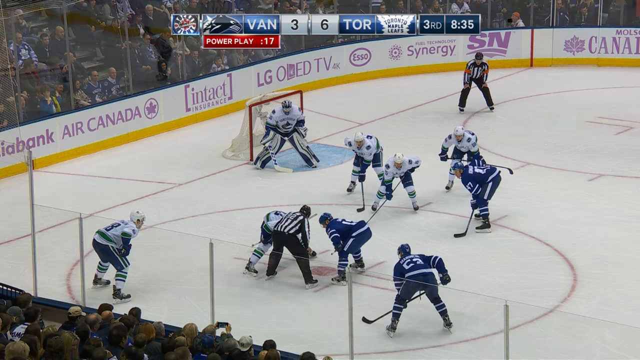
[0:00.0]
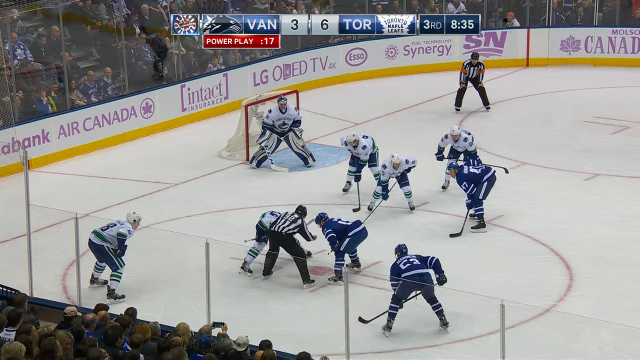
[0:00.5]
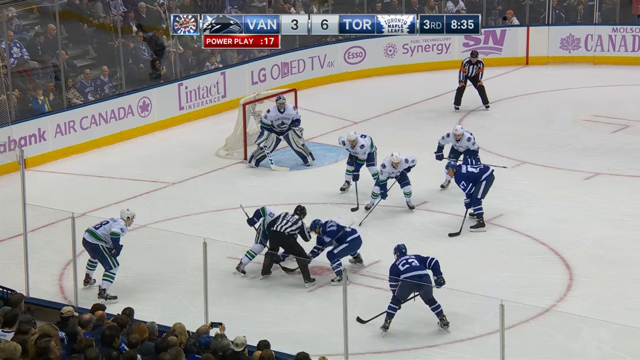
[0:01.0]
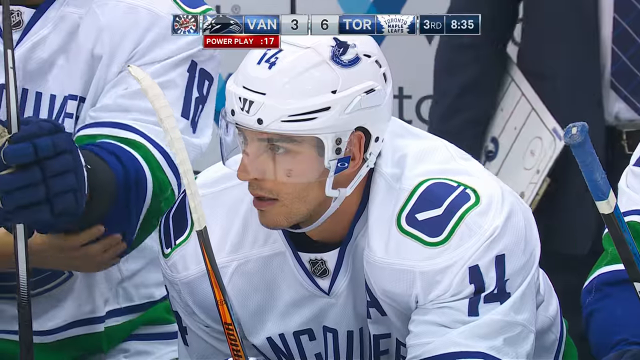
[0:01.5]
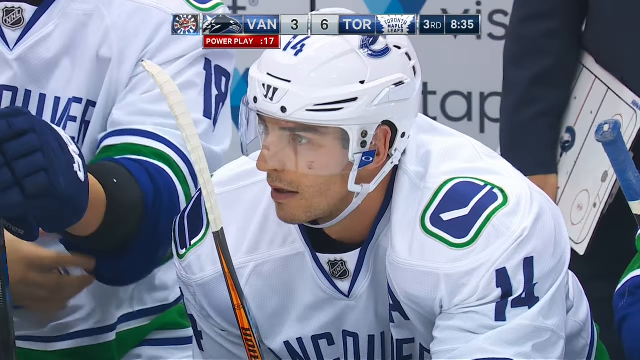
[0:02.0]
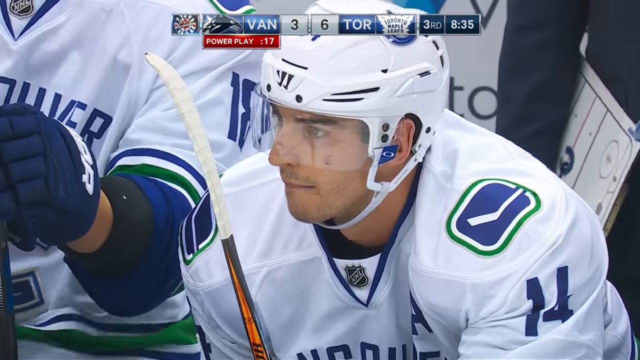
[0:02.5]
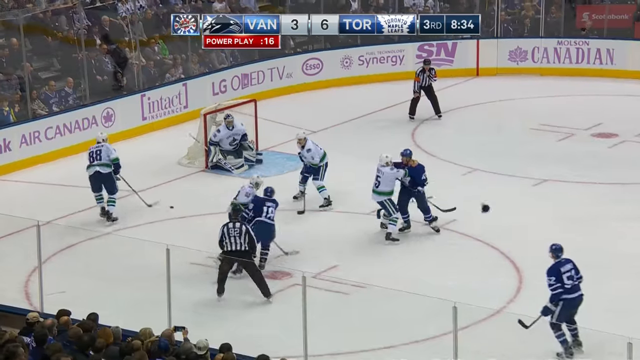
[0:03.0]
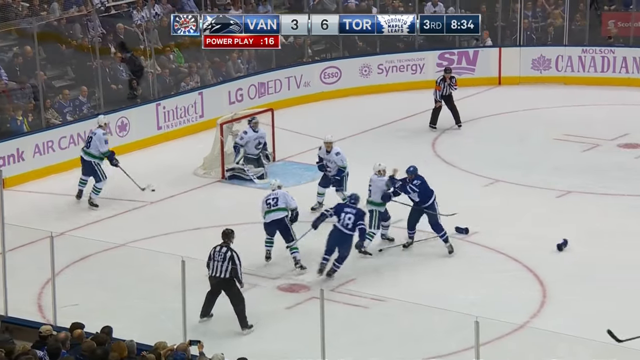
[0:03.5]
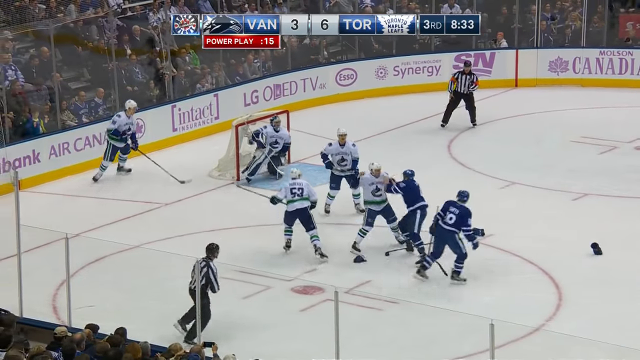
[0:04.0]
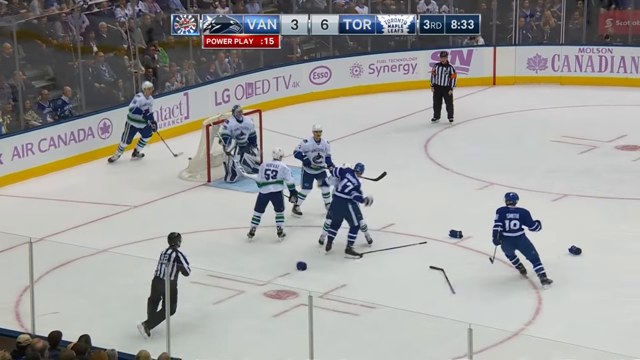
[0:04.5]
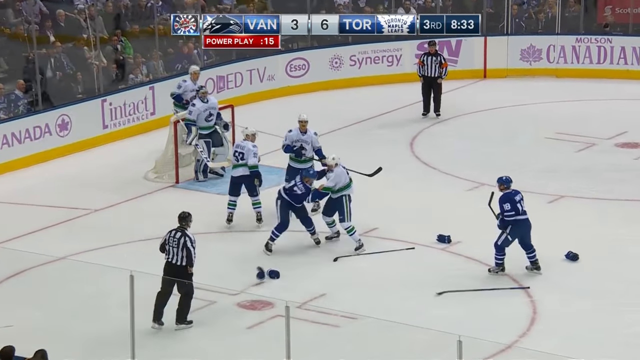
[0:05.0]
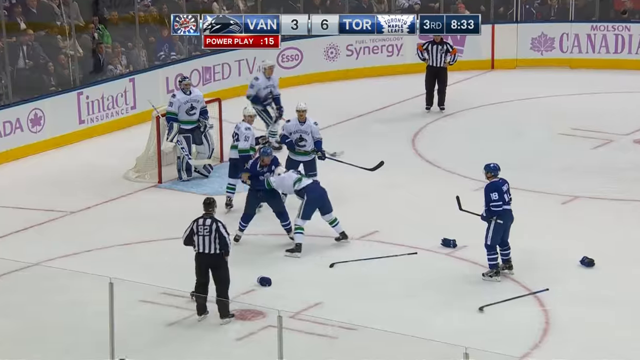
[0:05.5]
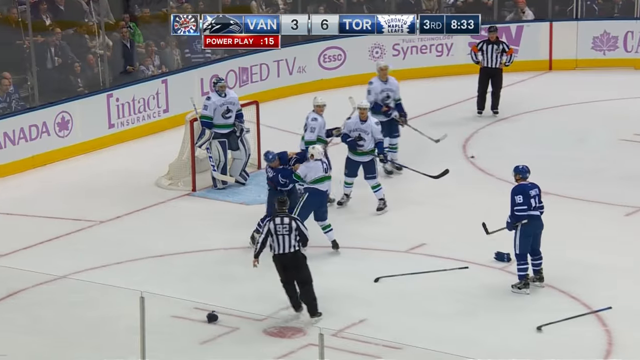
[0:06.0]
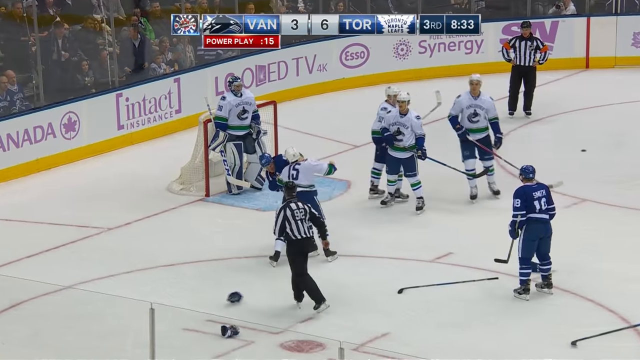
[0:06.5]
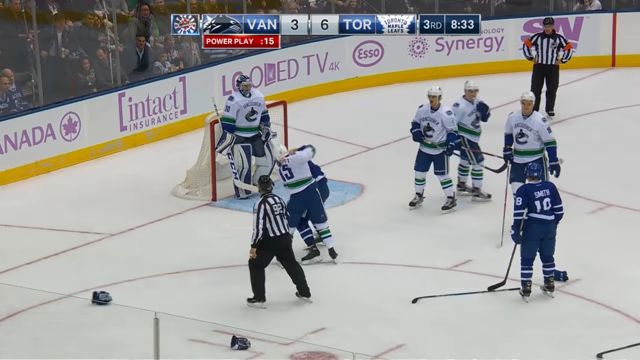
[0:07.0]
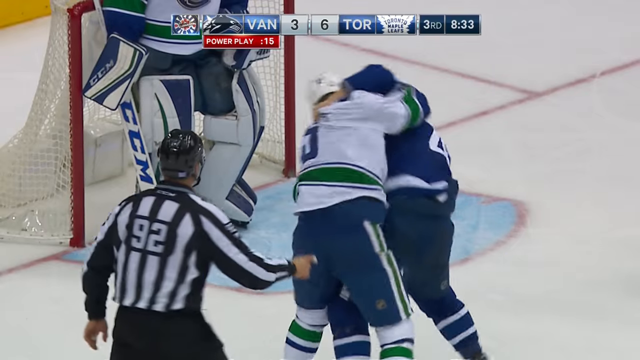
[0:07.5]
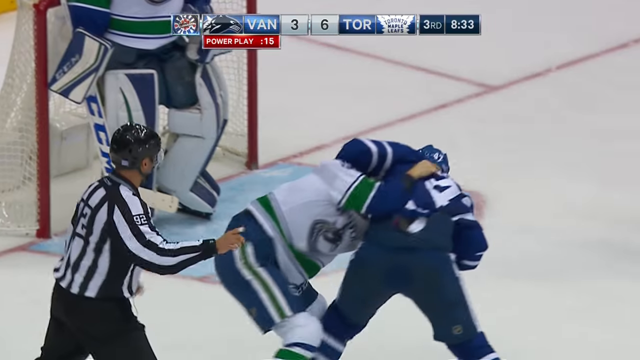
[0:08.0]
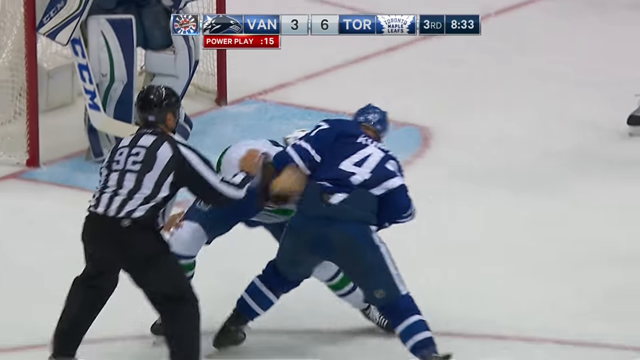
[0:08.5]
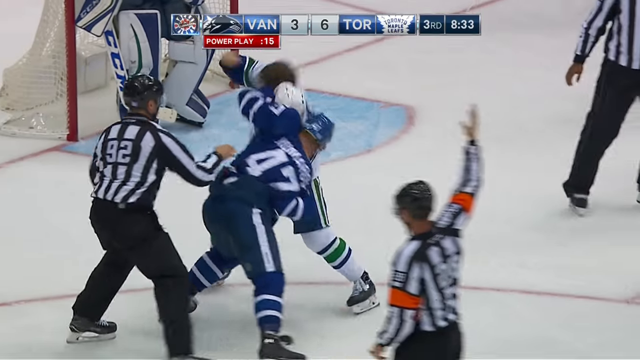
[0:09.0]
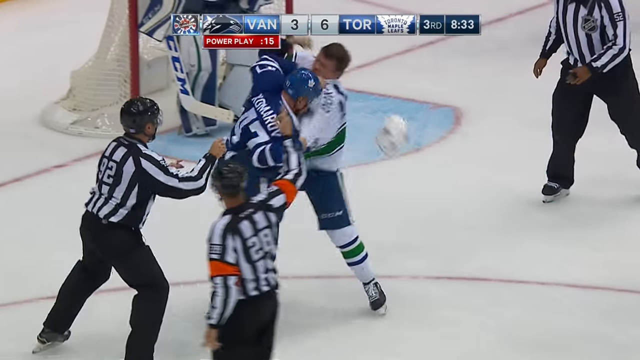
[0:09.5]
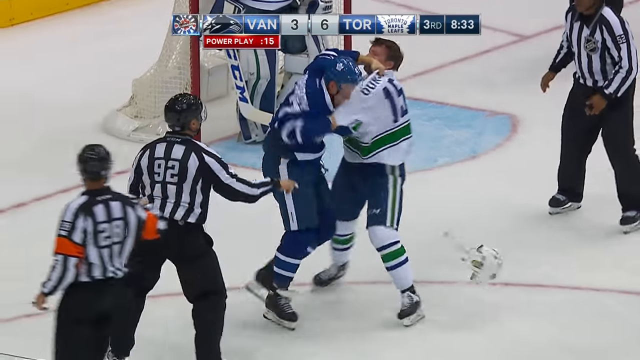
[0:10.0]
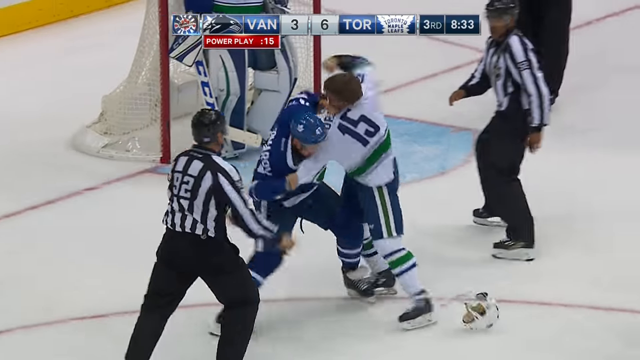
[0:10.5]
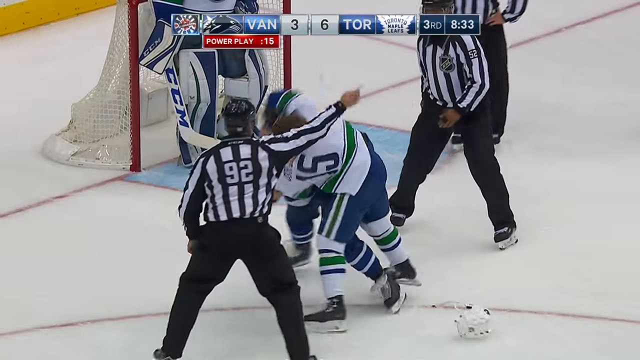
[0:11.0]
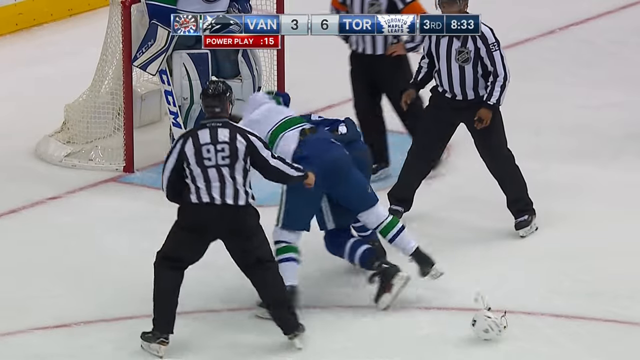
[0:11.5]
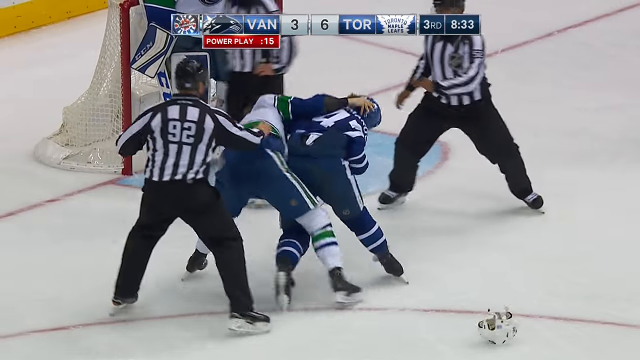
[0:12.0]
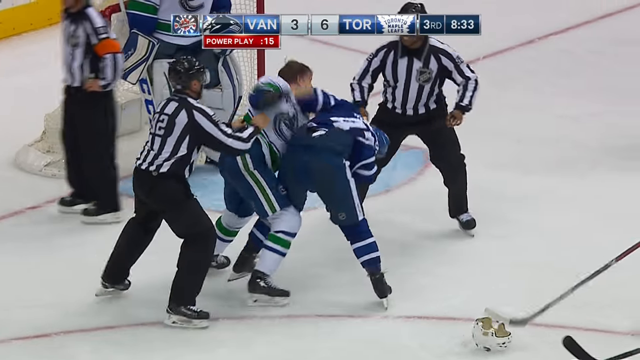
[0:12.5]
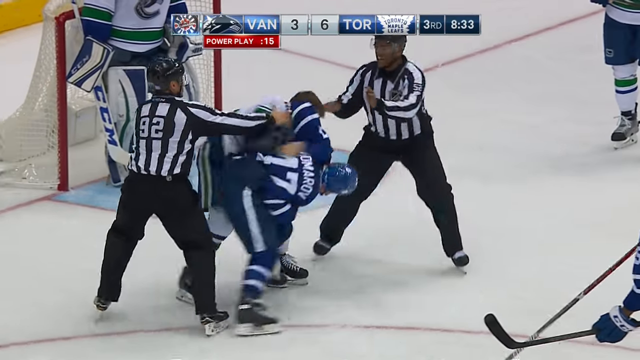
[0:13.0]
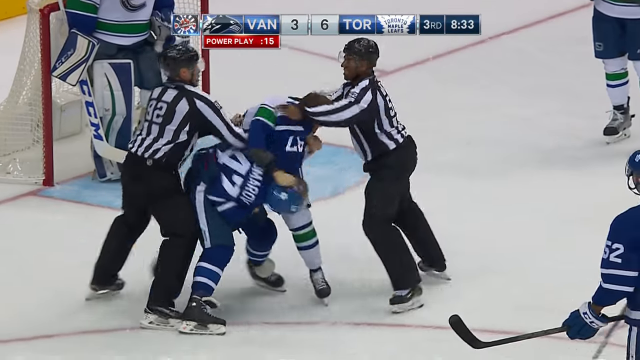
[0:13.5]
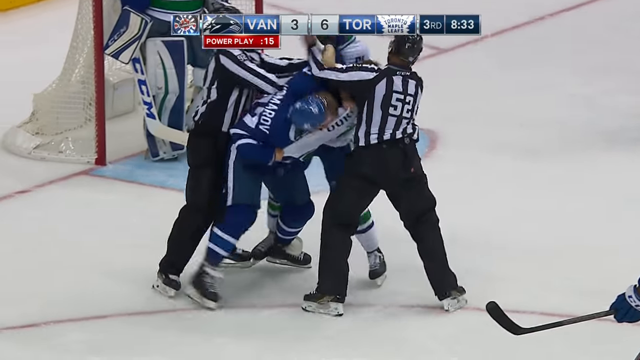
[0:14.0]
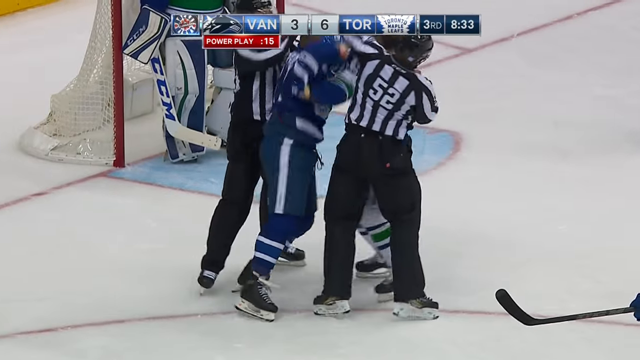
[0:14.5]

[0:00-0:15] A hockey rink is shown mid-game, and the video opens with a fight between Toronto and Vancouver. Toronto is apparently in blue and Vancouver in white. One Vancouver player and one Toronto player have gone at each other. The player in blue keeps his helmet on the whole time, while the player in white does not; his helmet comes off. The player in blue seems not to be throwing any punches, while the player in white throws all the punches. There are four referees in total: two are in the middle of the fight trying to break it up, and the other two circle around, one much closer than the other, to make sure everything is okay. The game is in Canada, with multiple ads for Canadian businesses along the rails. The stadium seems to be full. The ice is white. The score is 6-3 Toronto over Vancouver.